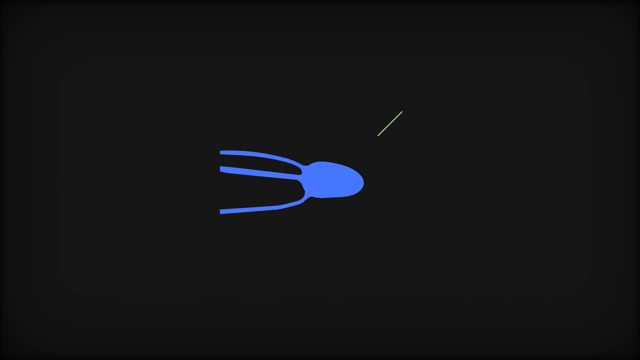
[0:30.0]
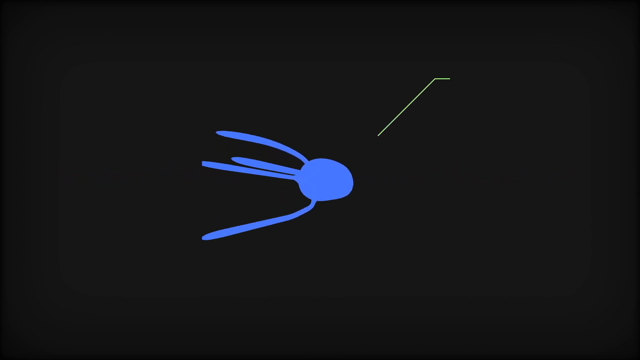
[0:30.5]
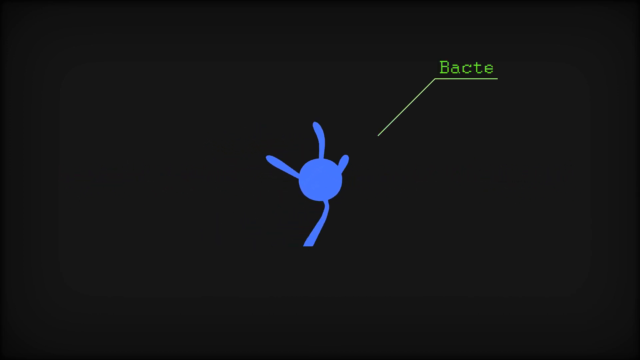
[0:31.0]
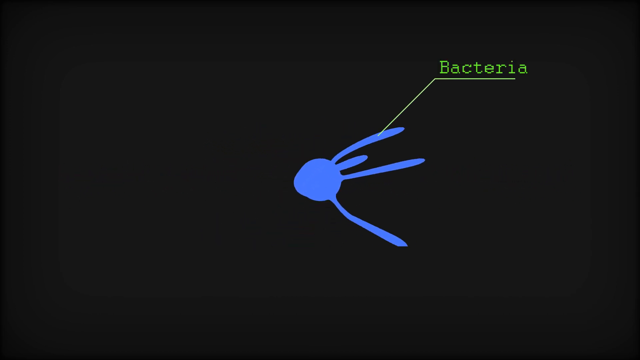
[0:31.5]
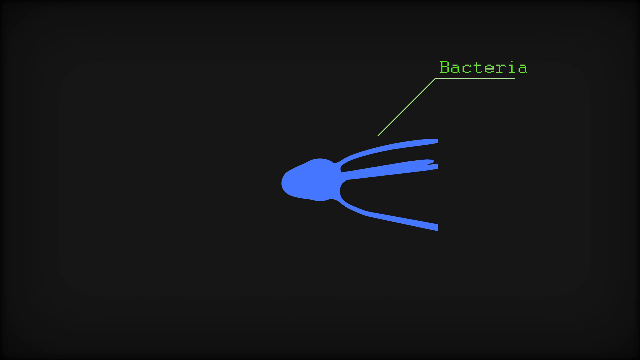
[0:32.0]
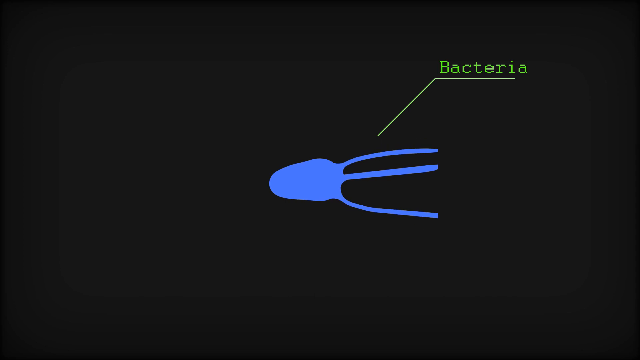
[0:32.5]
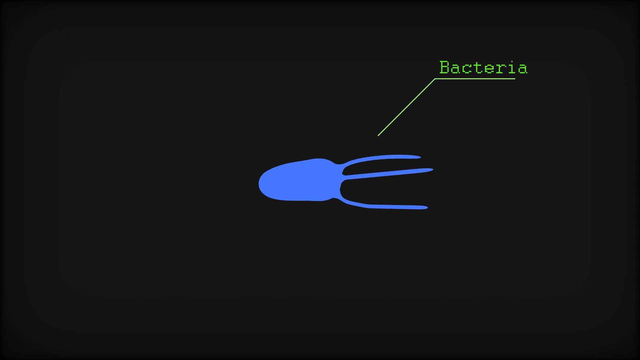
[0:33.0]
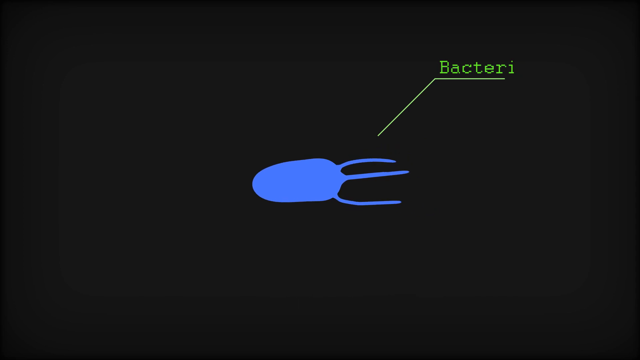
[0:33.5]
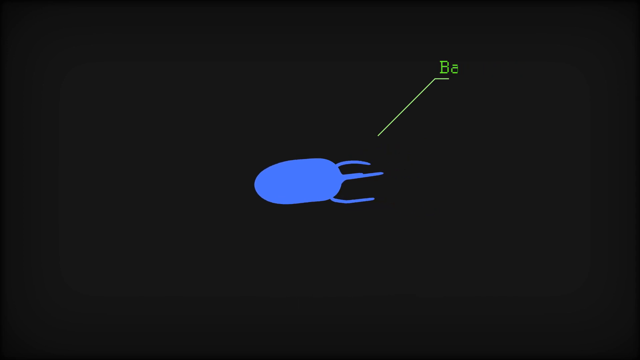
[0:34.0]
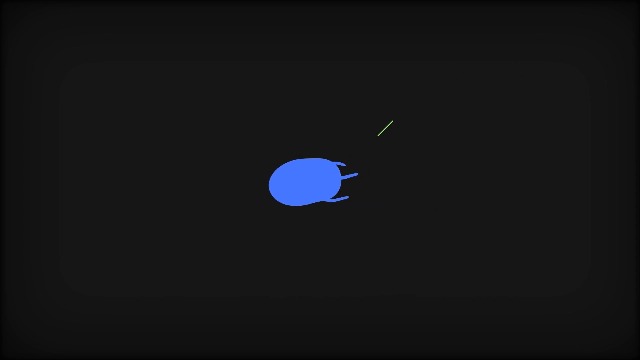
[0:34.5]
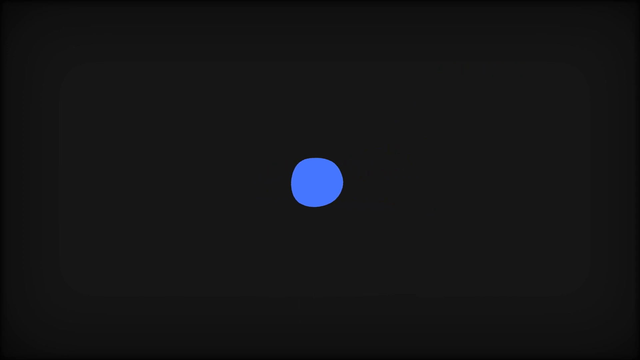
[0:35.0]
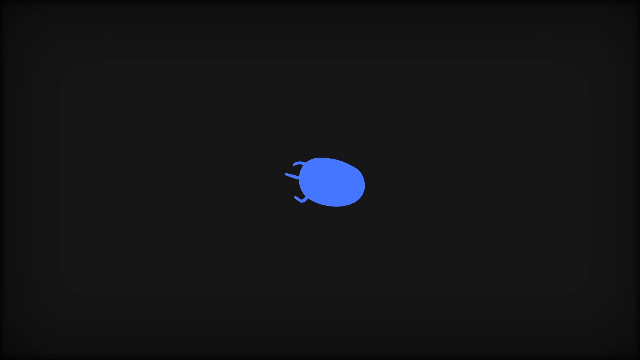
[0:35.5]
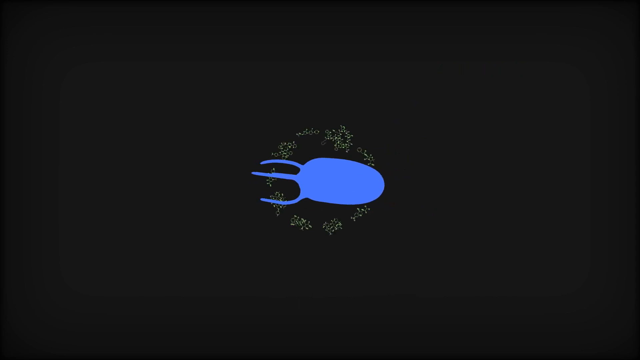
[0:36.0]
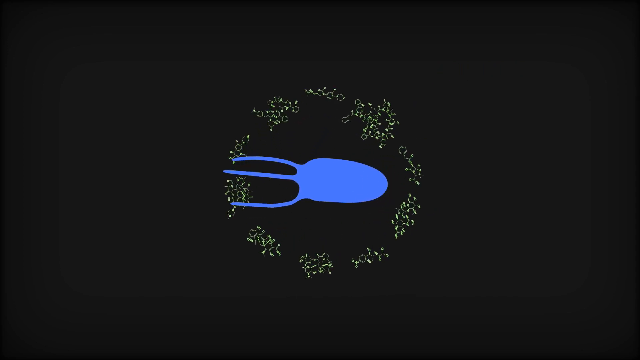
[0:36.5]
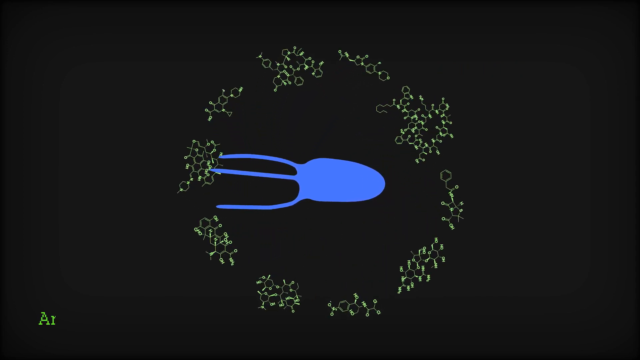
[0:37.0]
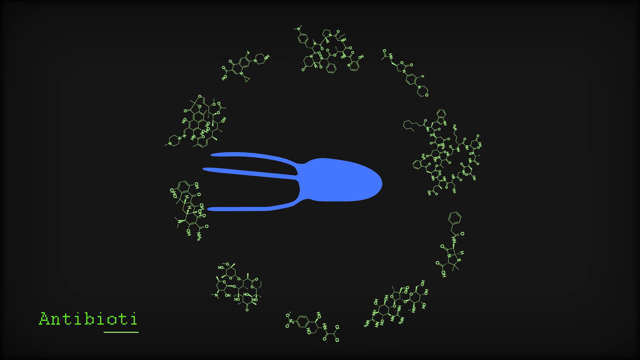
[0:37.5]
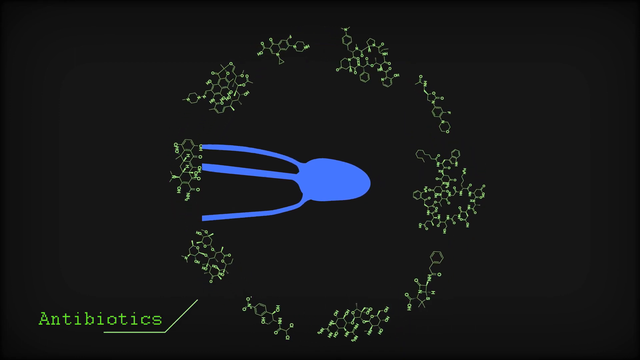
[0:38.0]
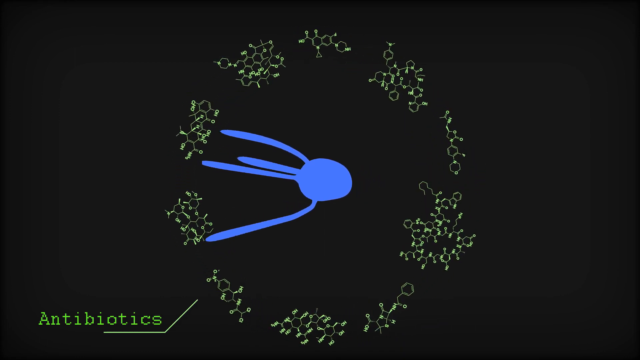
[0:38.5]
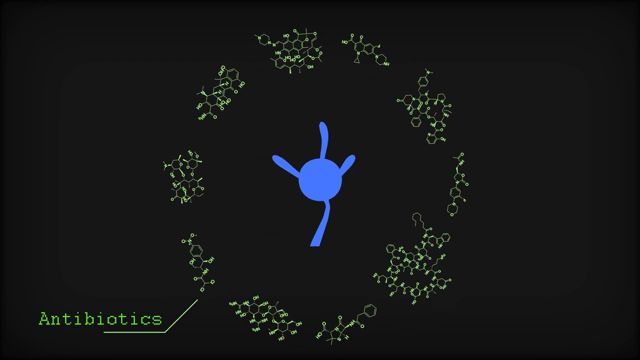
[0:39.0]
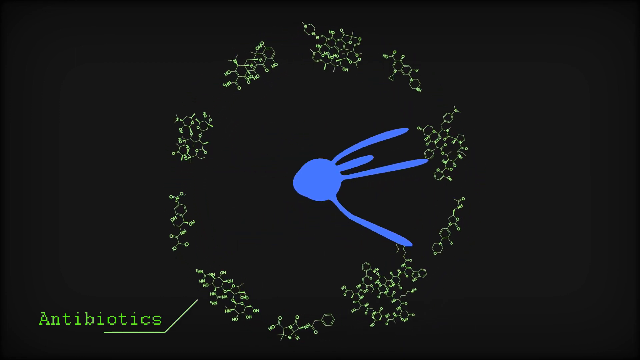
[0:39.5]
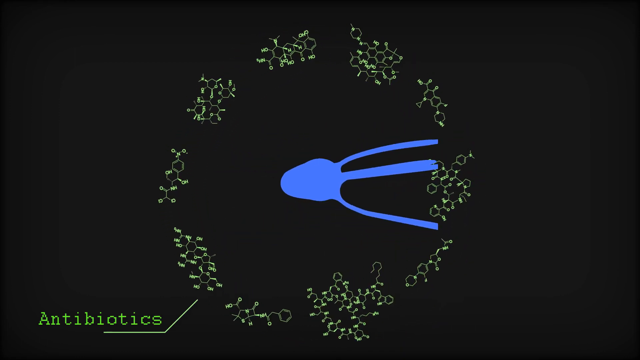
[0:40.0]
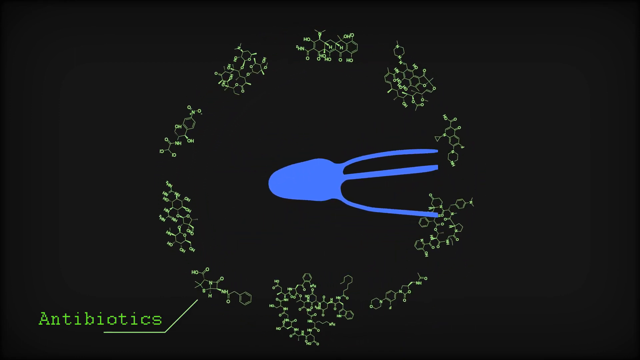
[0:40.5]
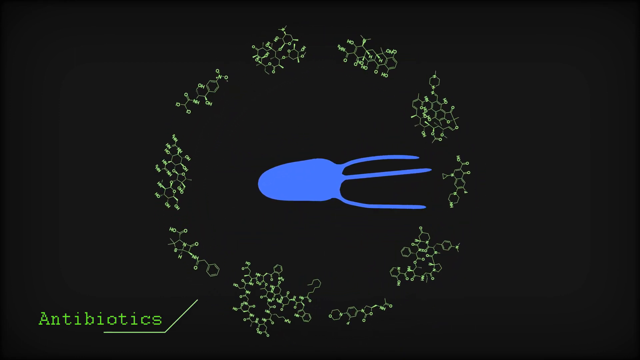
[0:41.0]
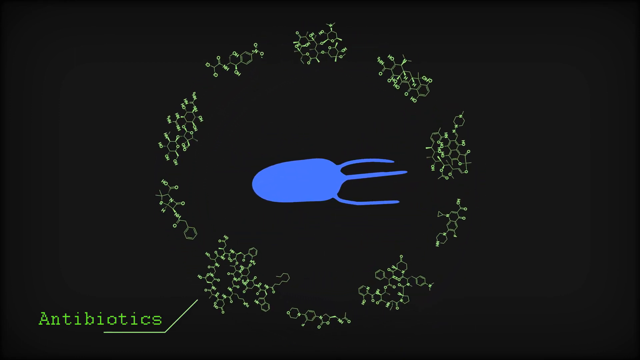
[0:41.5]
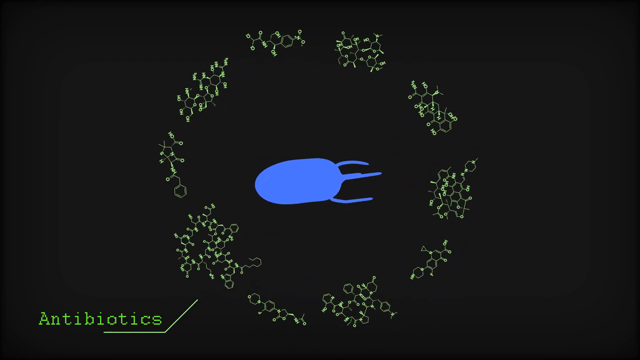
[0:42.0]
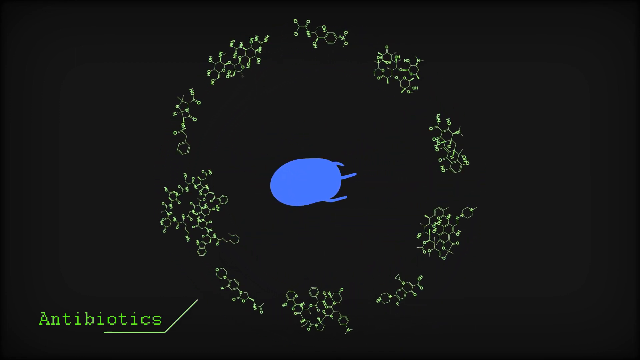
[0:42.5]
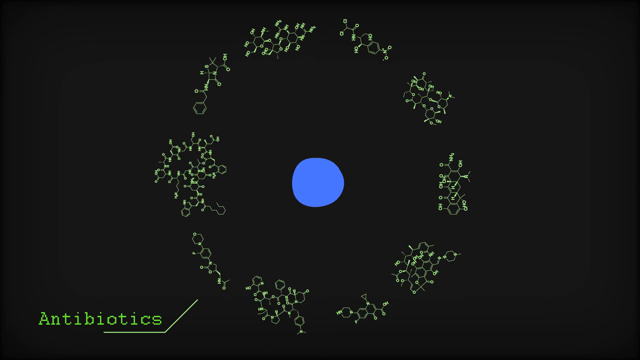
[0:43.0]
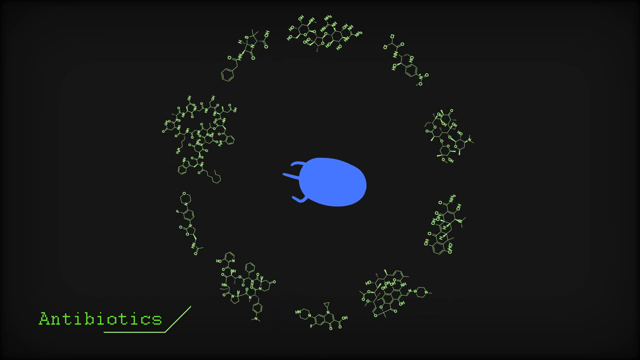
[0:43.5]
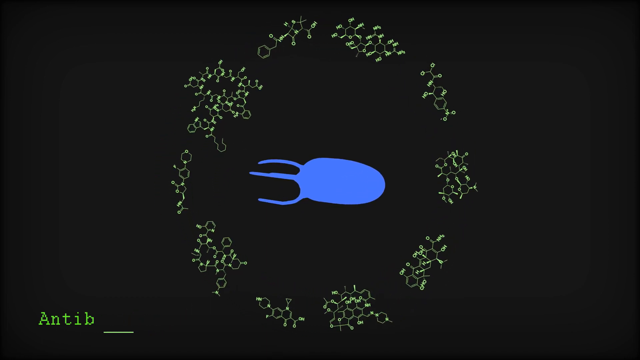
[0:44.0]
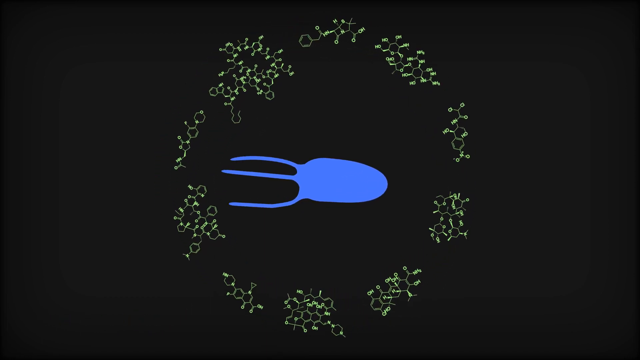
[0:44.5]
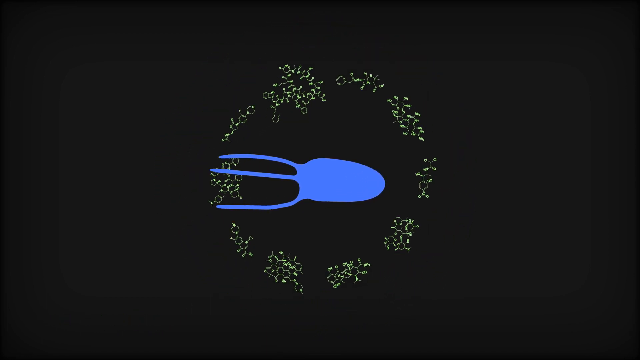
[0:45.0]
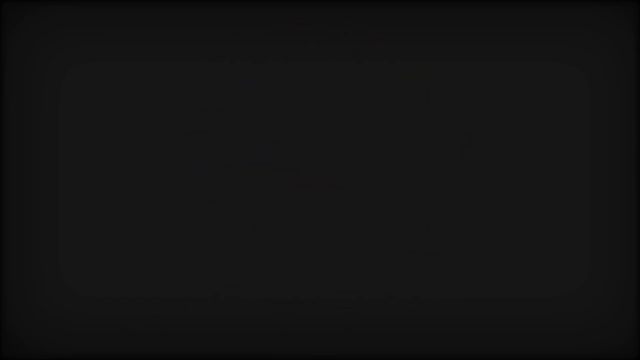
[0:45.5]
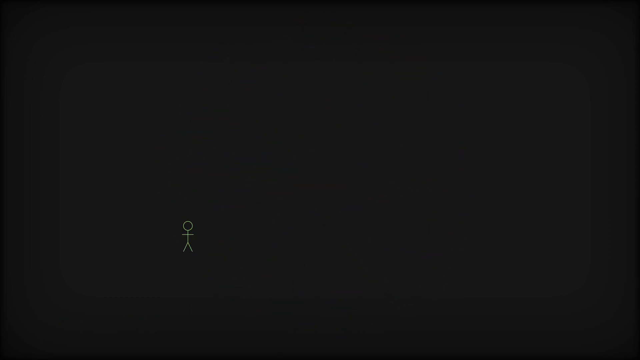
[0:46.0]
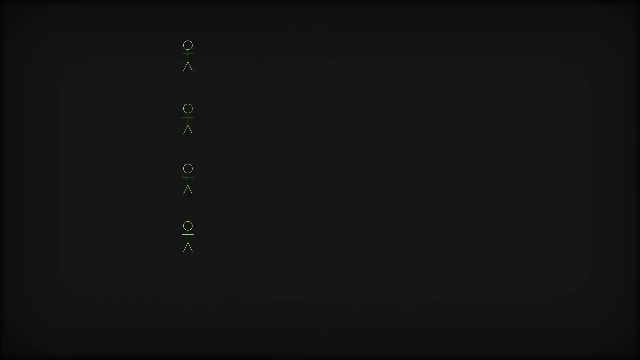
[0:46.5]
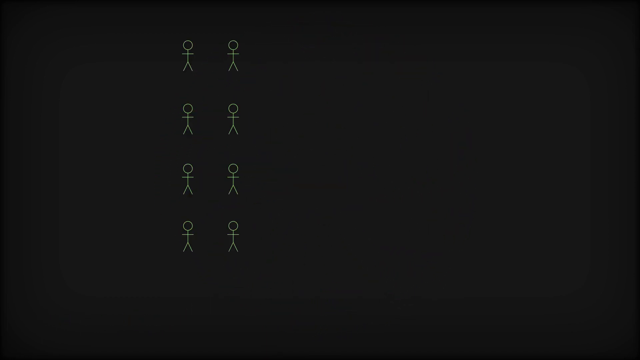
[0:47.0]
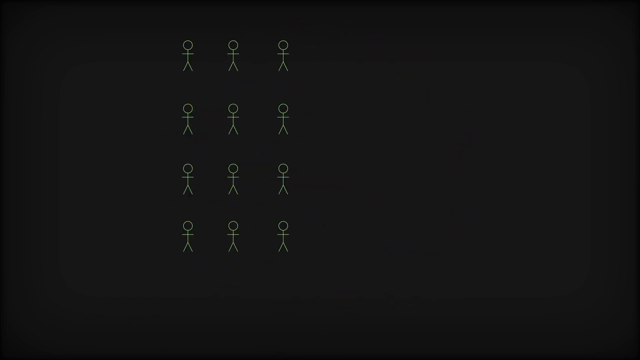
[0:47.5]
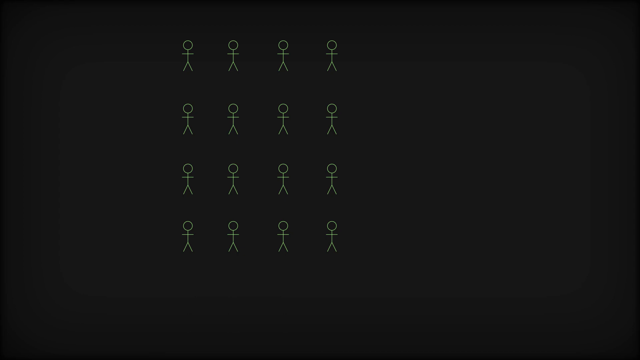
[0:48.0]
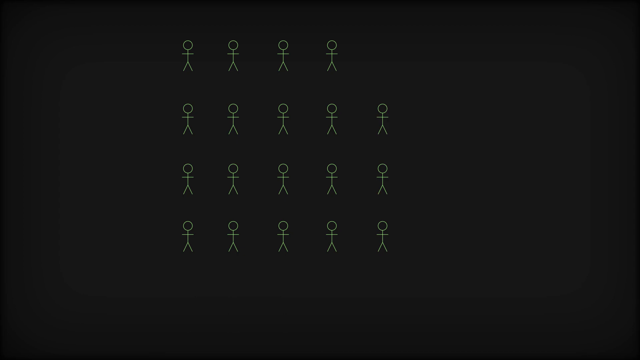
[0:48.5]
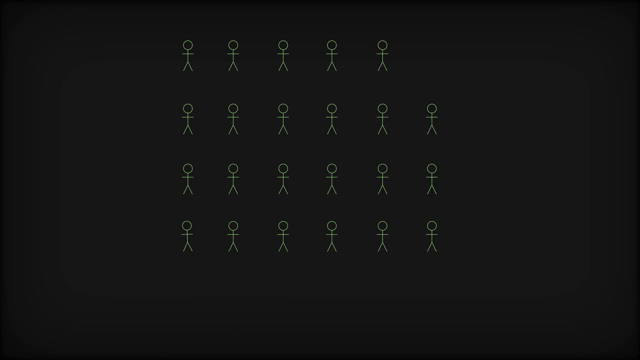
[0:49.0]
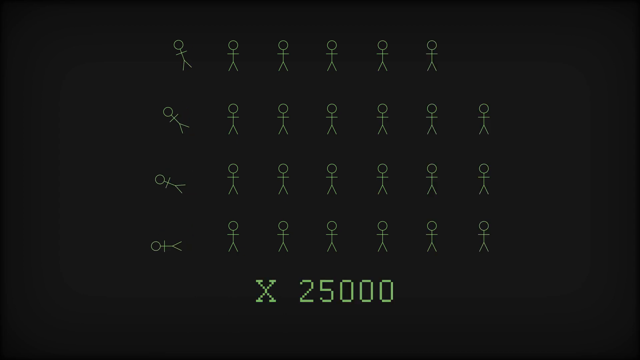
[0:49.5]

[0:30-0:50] The animation opens with the blue squid-like object, identified as a bacterium, turning around against an all-black background and spinning on a horizontal axis. A graphic reads "bacteria". Some other yellow forms, unclear in nature, maybe viruses, orbit around the squid-like bacterium. Then an image of figures appears, apparently representations of human bodies; they line up five by four and then fall down. The scene then cuts to the image of the blue, squid-like bacterium again.